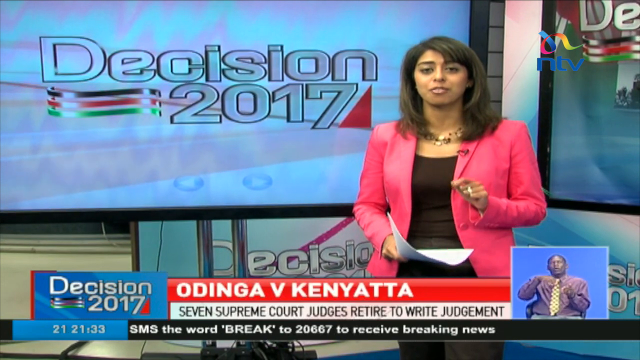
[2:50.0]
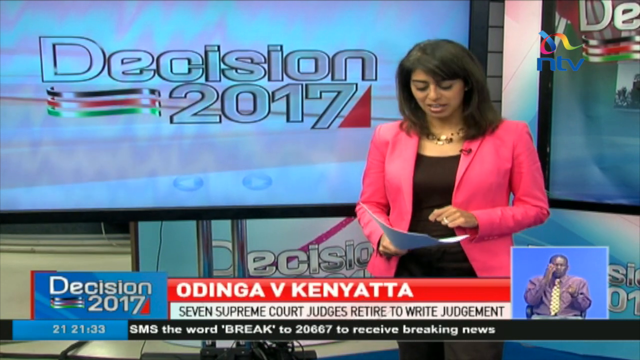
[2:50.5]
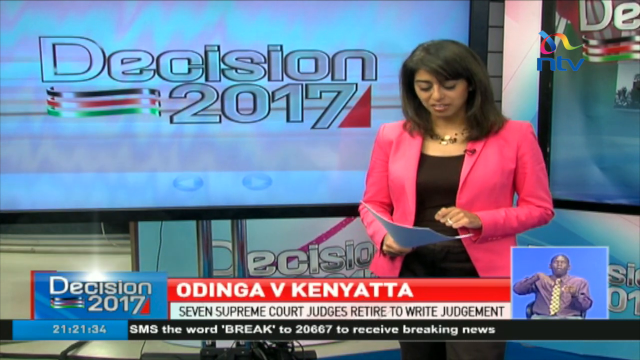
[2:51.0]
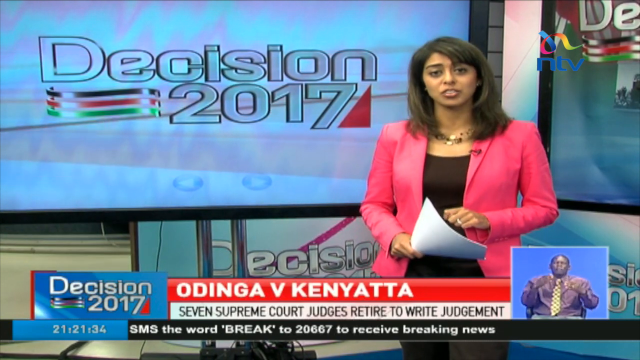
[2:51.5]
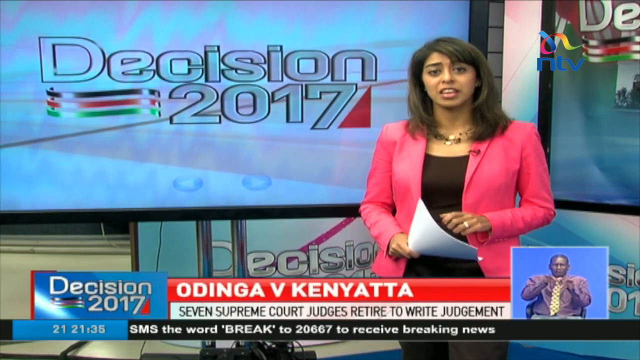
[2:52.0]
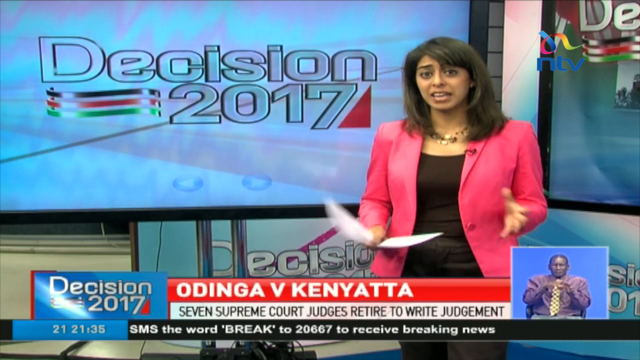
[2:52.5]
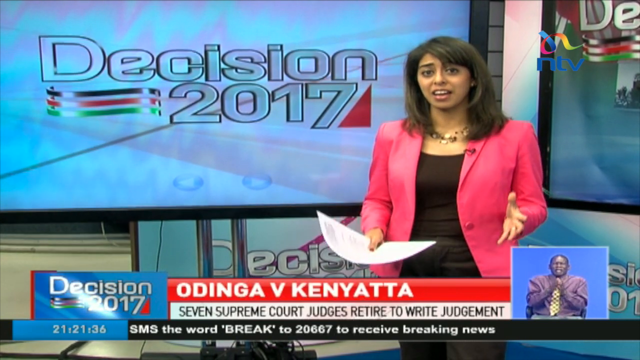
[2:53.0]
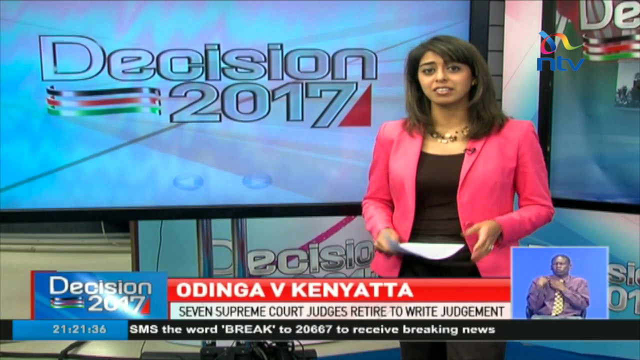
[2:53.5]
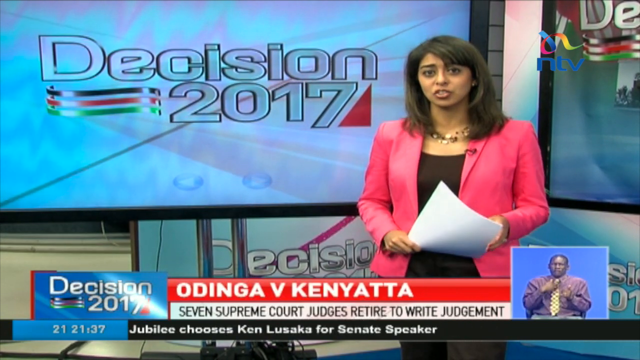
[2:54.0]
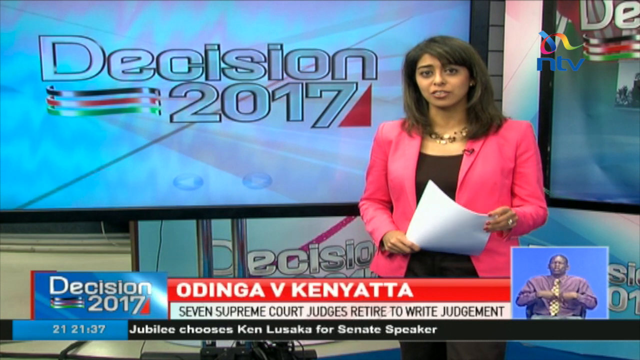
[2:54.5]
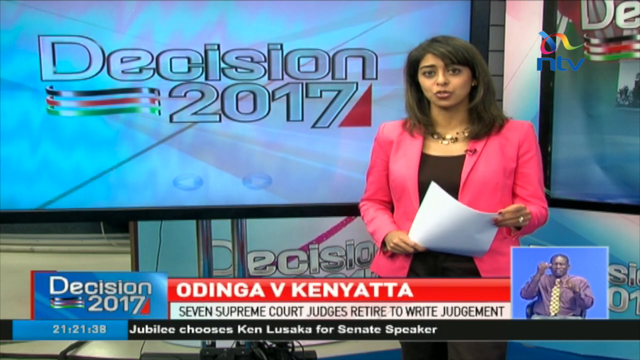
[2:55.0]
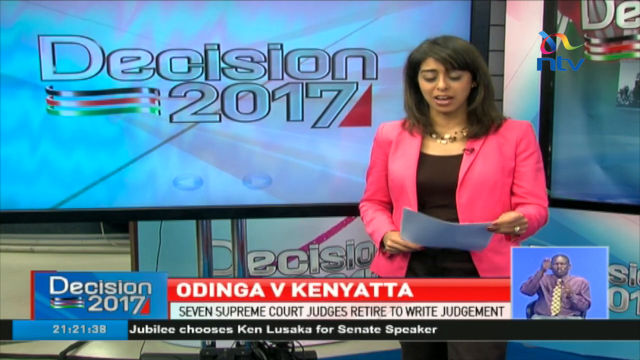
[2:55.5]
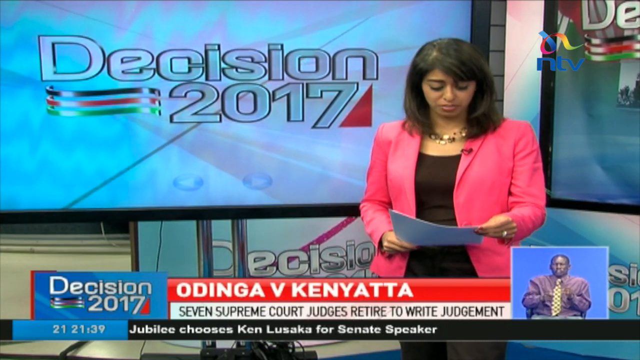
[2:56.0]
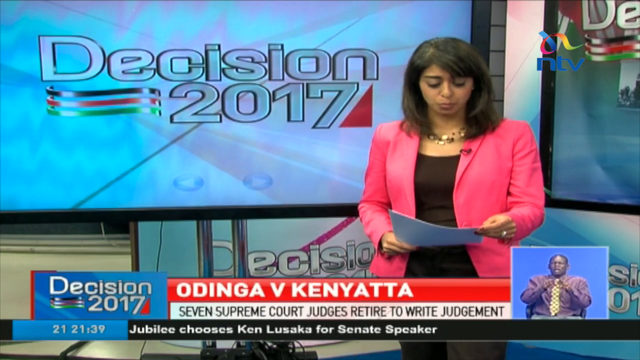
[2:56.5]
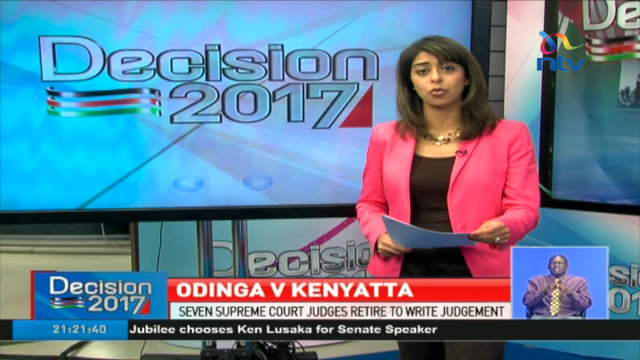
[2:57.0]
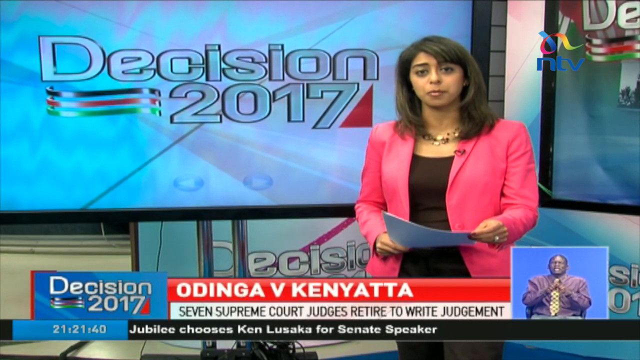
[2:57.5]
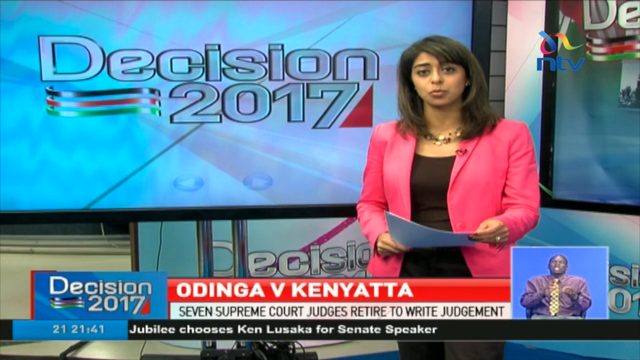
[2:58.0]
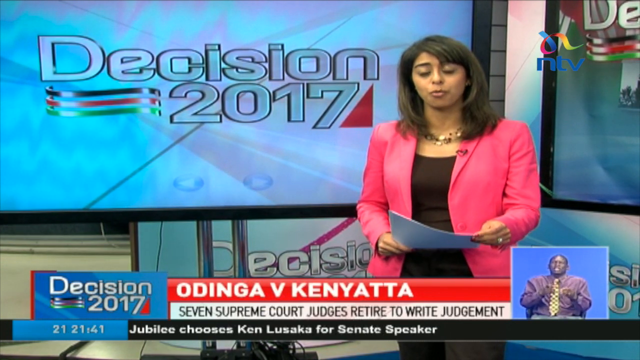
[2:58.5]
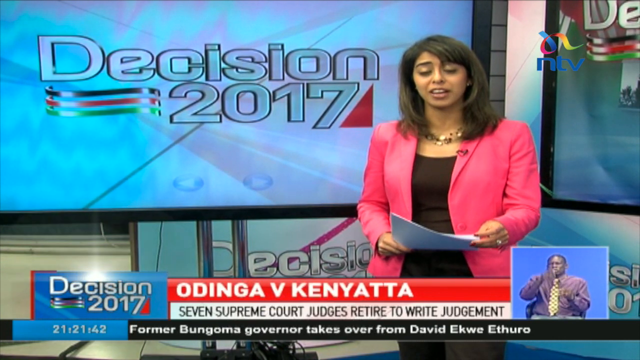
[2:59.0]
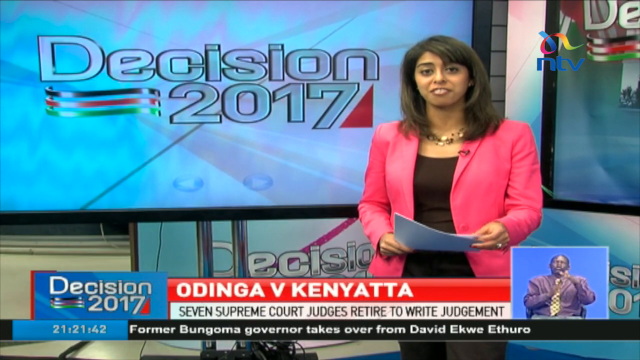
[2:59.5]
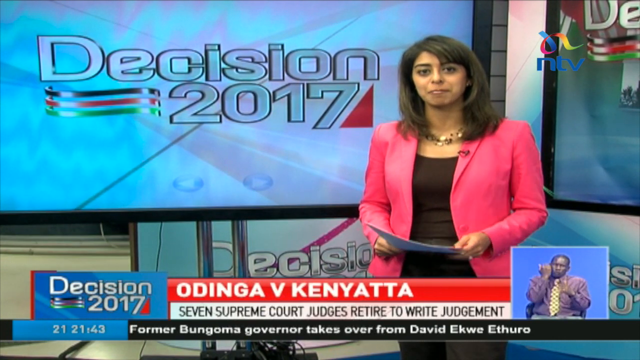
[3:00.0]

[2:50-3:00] A female news reporter stands in front of a large screen that says "Decision 2017," with a small graphic that looks like the Kenyan flag. She wears a dark pink blazer and a black top and holds a stack of white papers in front of her. She looks down at the papers and back up as she speaks, then kind of holds both hands up near her stomach, to her sides, while holding the stack of paper in one hand. On the bottom right of the screen, a small frame shows an African man in a light purple shirt and yellow tie sitting in front of a blue background giving sign language. The segment seems to be signing off.